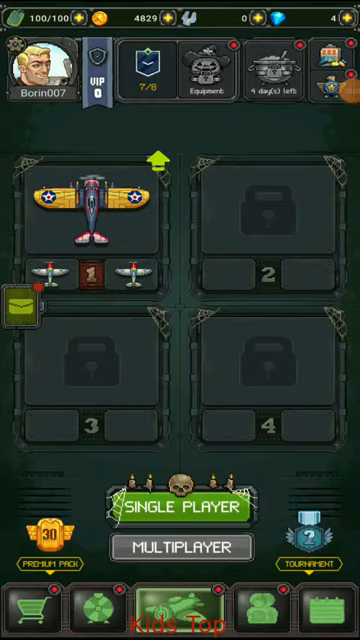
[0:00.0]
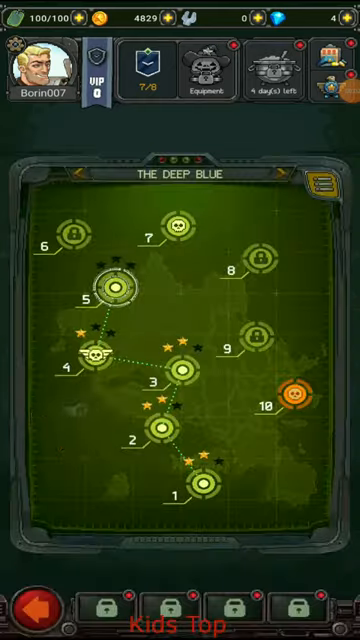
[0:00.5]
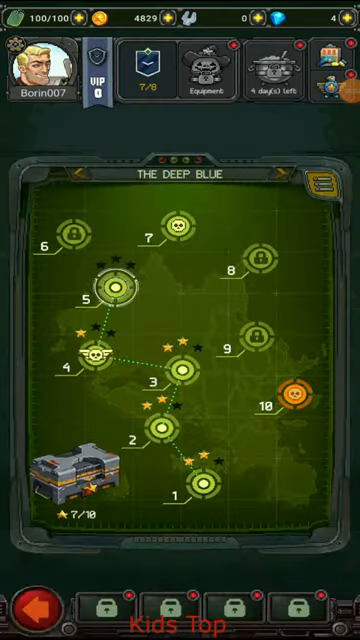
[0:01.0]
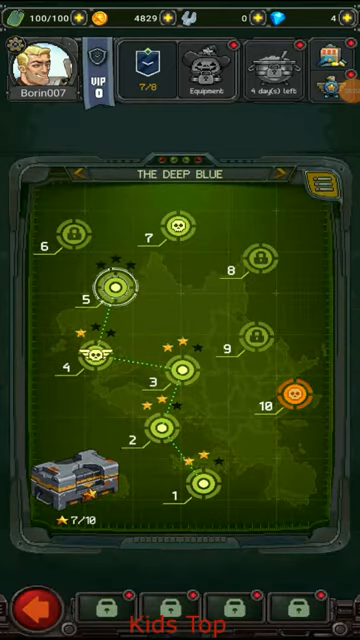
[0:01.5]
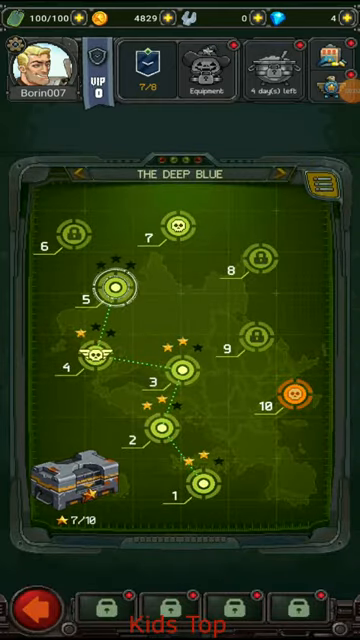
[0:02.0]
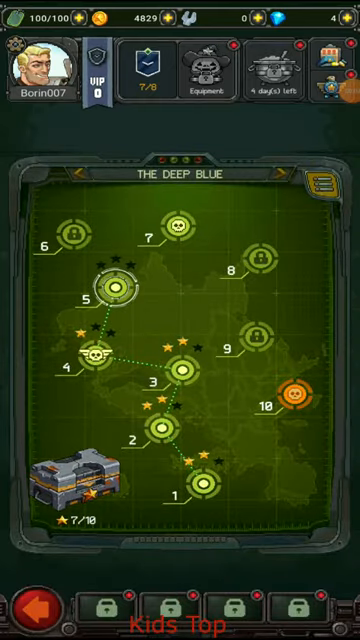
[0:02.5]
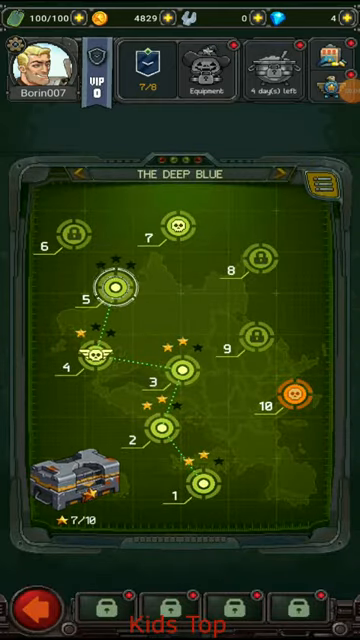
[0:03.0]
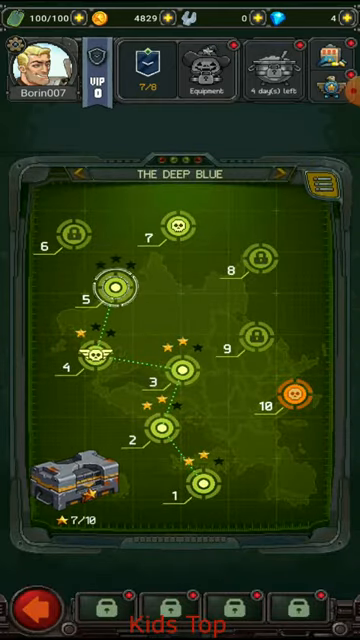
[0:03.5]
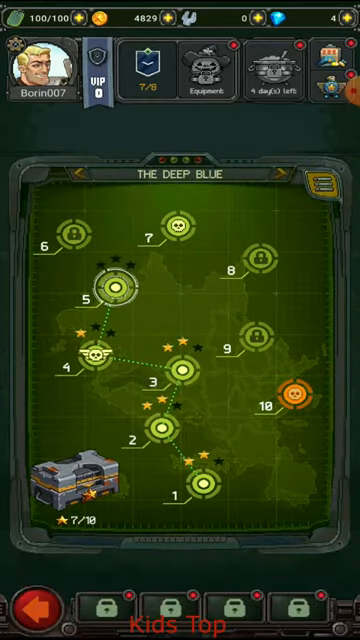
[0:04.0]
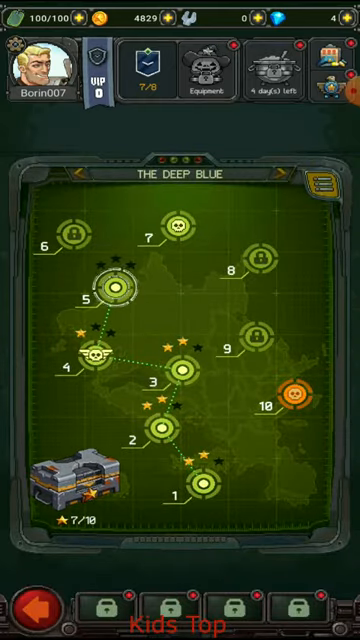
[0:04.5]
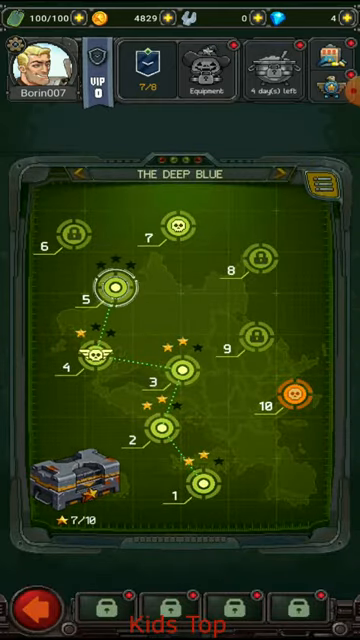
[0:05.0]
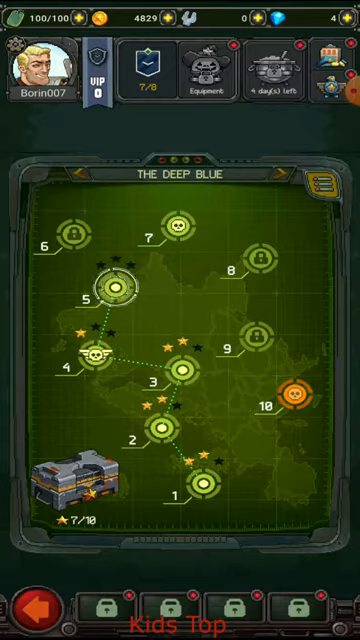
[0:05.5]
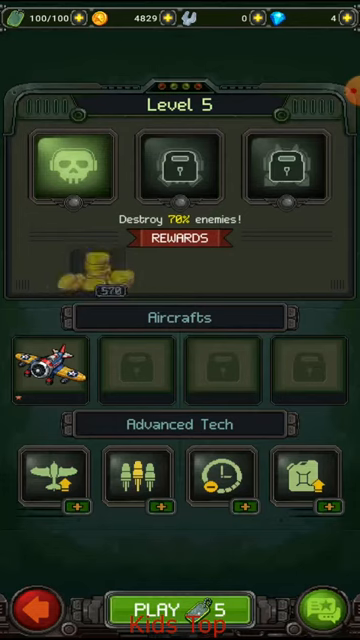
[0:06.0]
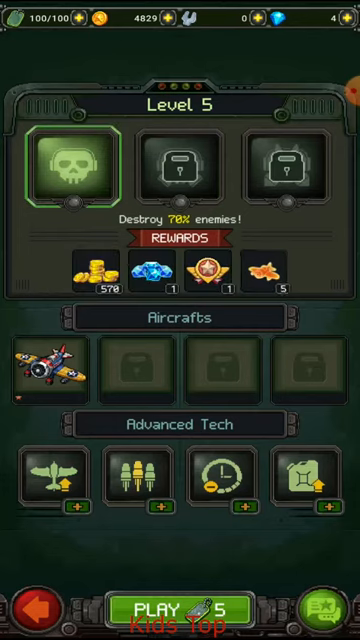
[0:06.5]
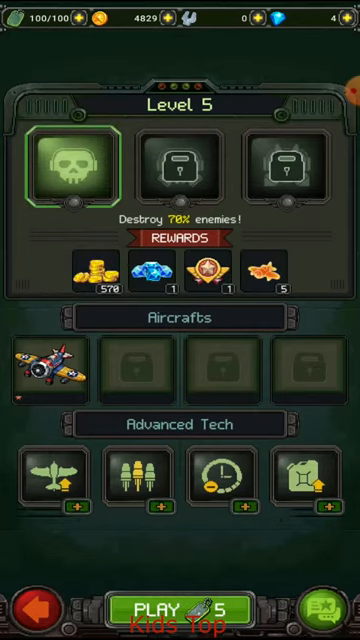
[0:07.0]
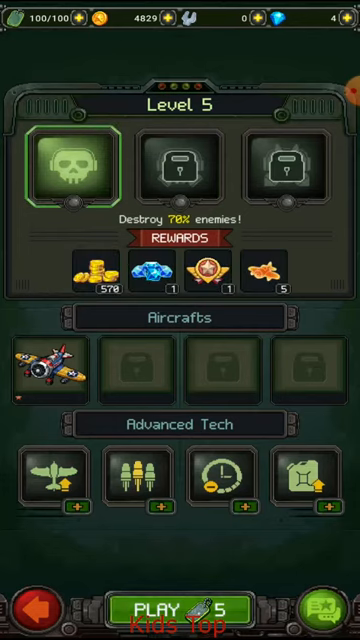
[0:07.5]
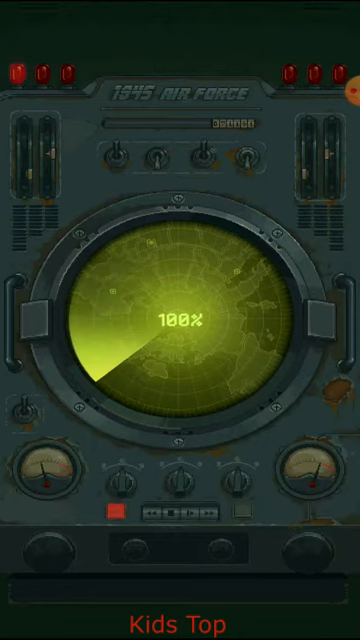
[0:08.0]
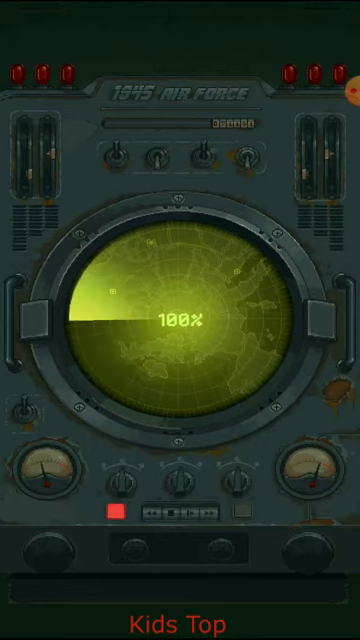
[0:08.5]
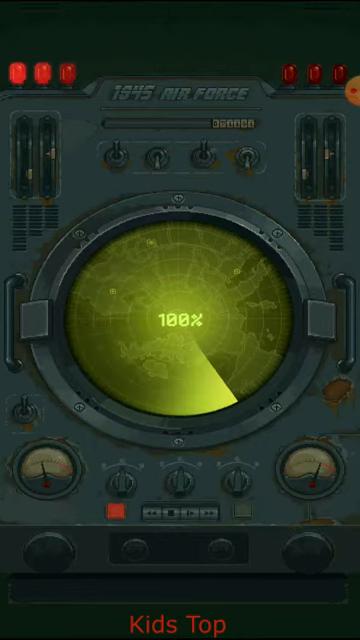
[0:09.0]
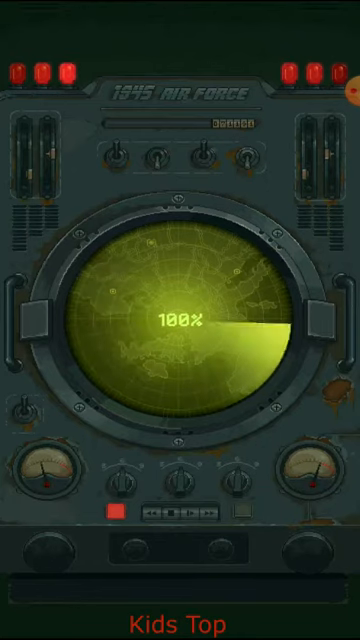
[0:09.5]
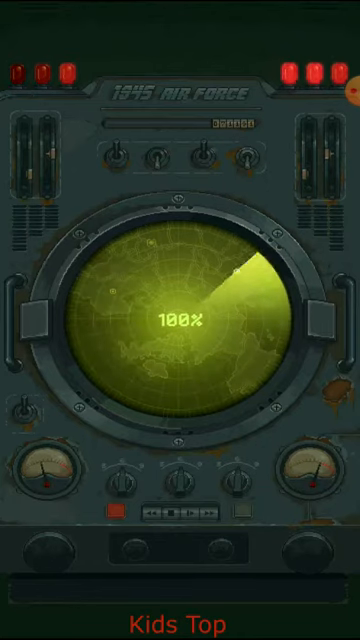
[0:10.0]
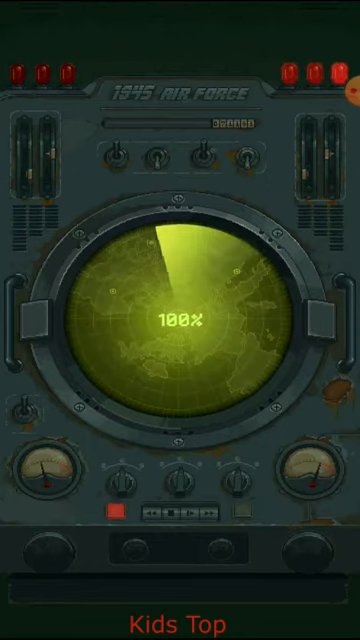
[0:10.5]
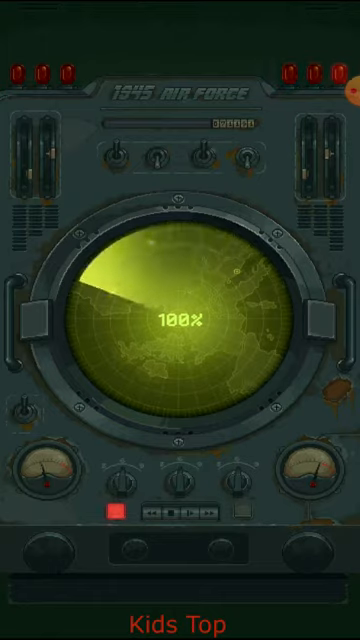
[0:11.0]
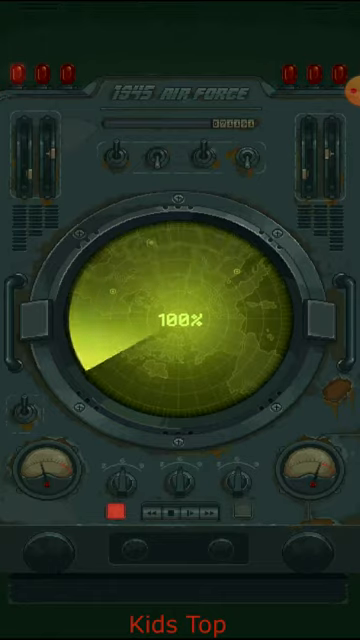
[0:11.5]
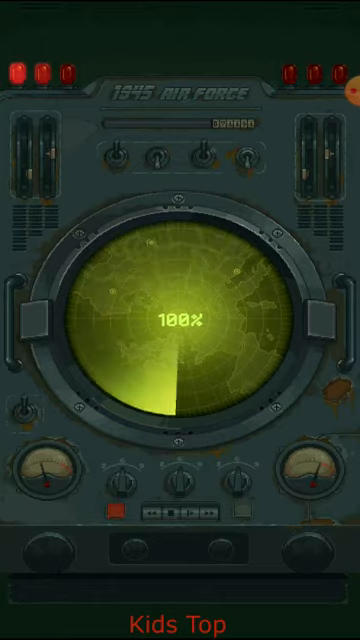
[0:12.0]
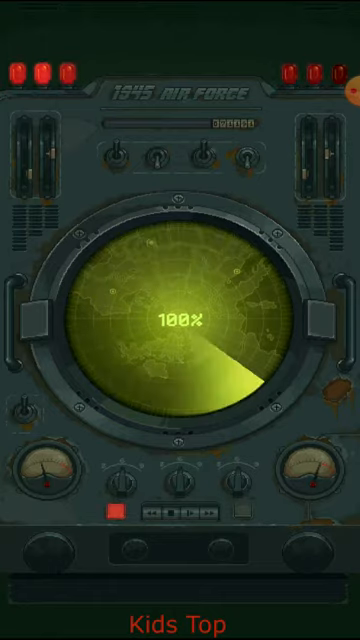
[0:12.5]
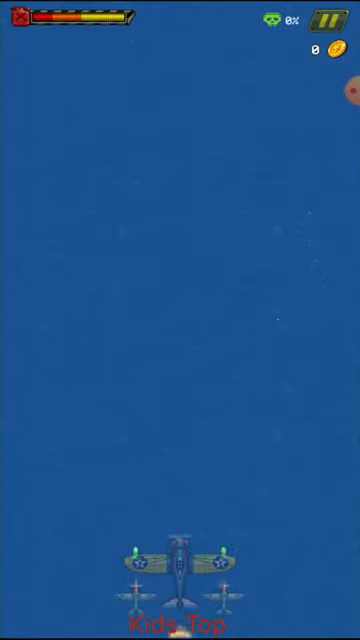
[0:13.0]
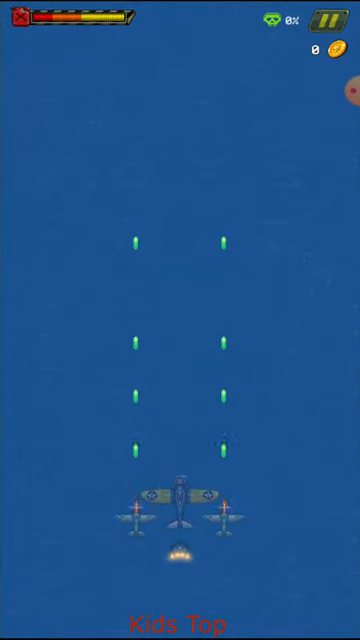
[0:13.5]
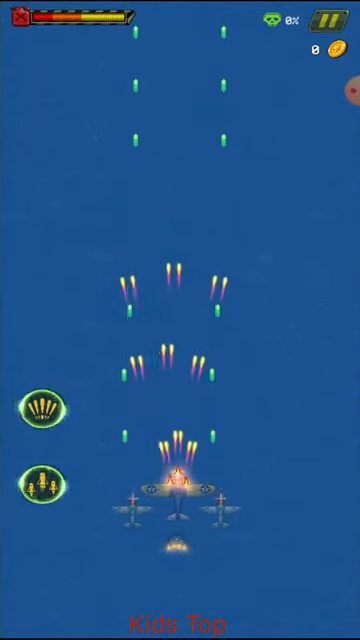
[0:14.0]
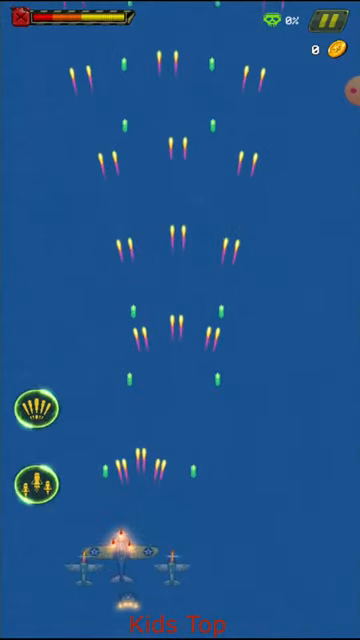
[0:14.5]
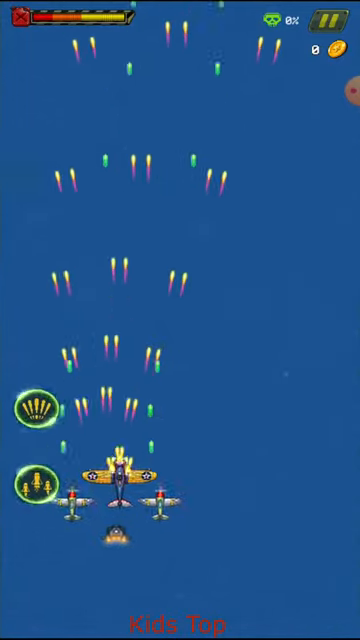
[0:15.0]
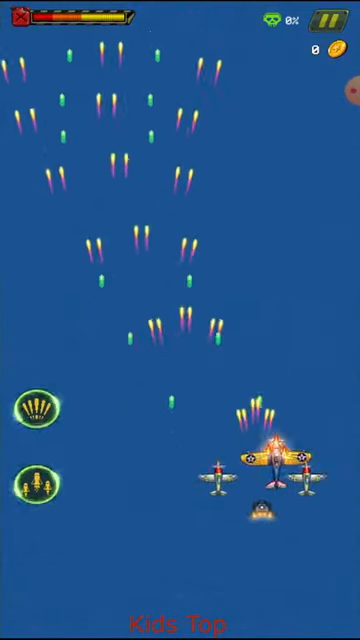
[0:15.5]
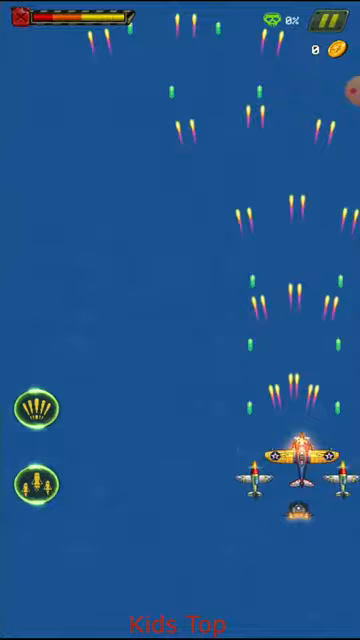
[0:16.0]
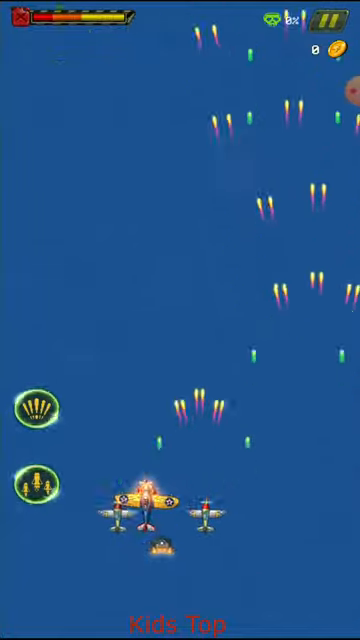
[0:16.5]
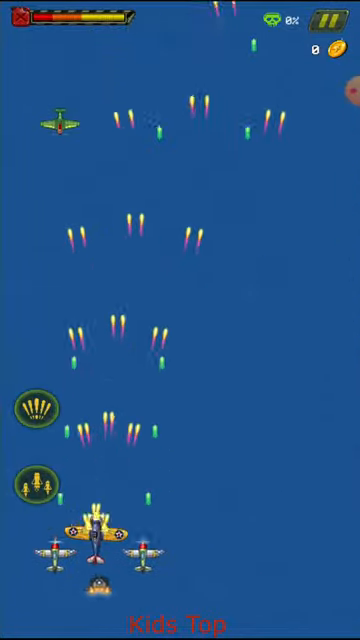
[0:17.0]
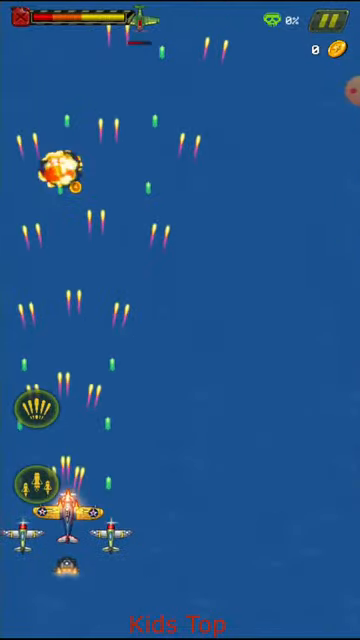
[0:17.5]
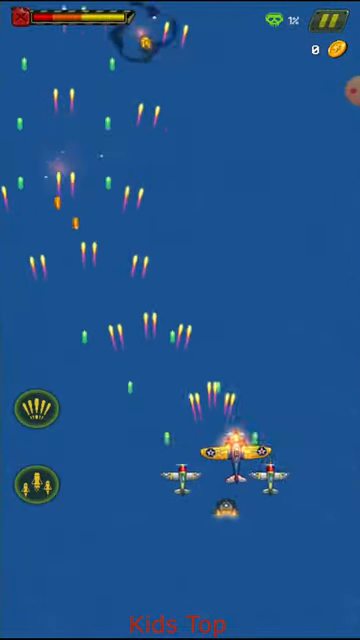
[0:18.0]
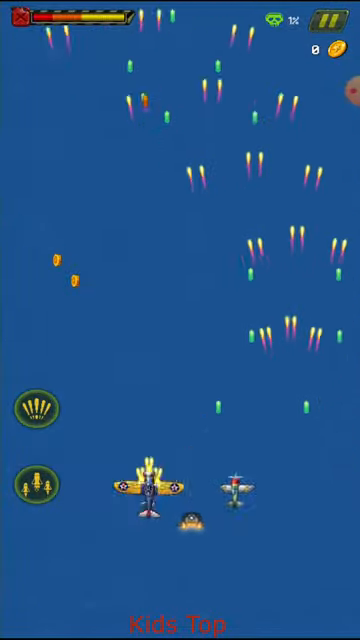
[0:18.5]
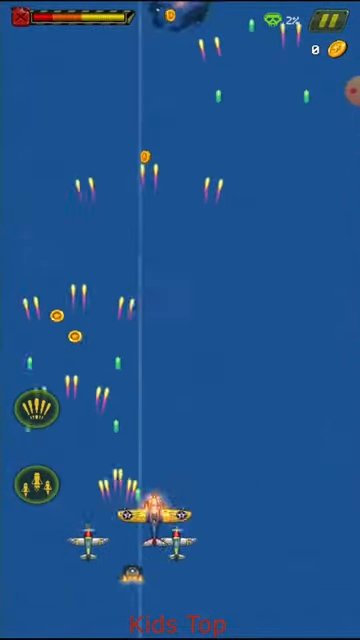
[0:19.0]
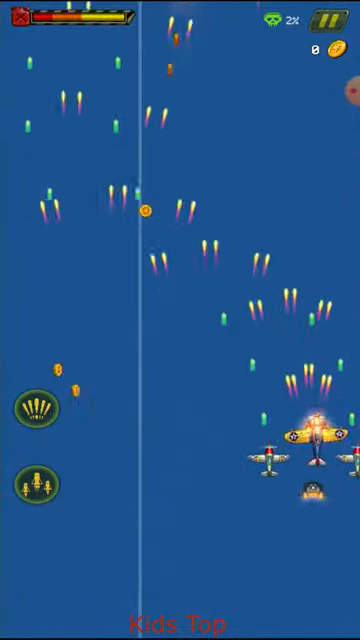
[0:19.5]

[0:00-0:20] The video shows what looks like a mobile game, apparently military-style. A character with blonde hair is in the upper left corner, and a military plane is in the center of the screen, with lots of symbols along the top. In the center the screen reads "1, 2, 3, and 4"; slots 2, 3 and 4 have locks on them and seem locked, while there seems to be a military plane in slot 1, apparently the plane available to the player. At the bottom is a title screen that says "Single player" or "Multiplayer", with a skull above it; this is where the player can choose what kind of game to play. There are some symbols at the bottom as well. As the game starts, the screen suddenly changes to some kind of radar screen with lots of dots and different targets shown. In the bottom left corner some kind of building or structure appears and drops down, bouncing and glowing up and down to show where the player should be looking. The screen then goes back to the first type of screen, showing some metals and different items under a title that says "Reward". In the top left corner there is a skull, and there are two other areas that are locked. Below that it says "Aircraft" and shows one aircraft unlocked. Below that it says "Advanced tech" and shows four technologies: a plane, what looks like three people, a clock, and some kind of gasoline tank. The screen then shifts again to some kind of radar that says "100X". What looks like the controls for a plane are on the screen, and the radar keeps spinning around. Suddenly the screen shifts to a fighter plane moving around and shooting a lot of bullets forward. A couple of symbols appear on the left side, and the plane keeps moving back and forth. There are actually three connected planes: one in the center and two on the left, with some kind of triangle in the back, all moving around and shooting.